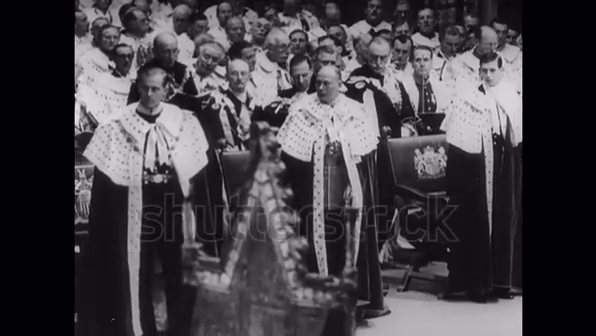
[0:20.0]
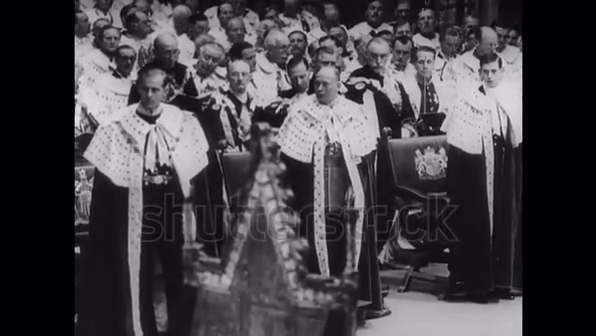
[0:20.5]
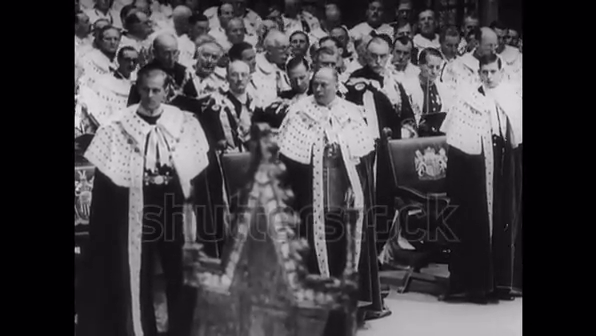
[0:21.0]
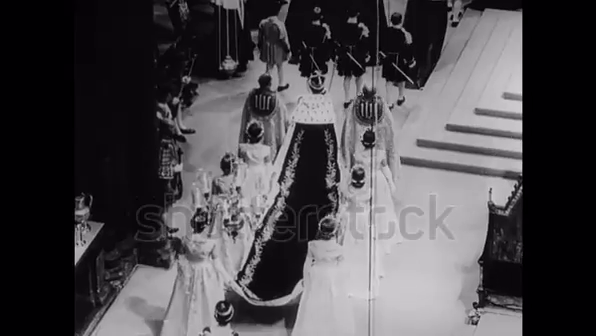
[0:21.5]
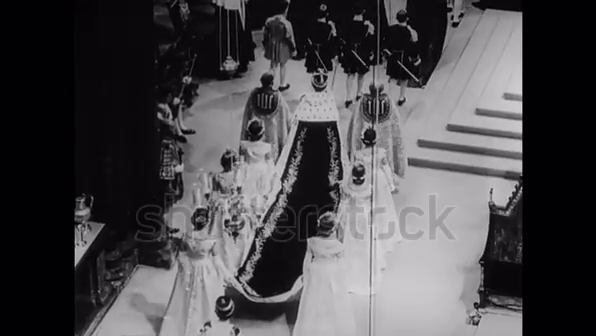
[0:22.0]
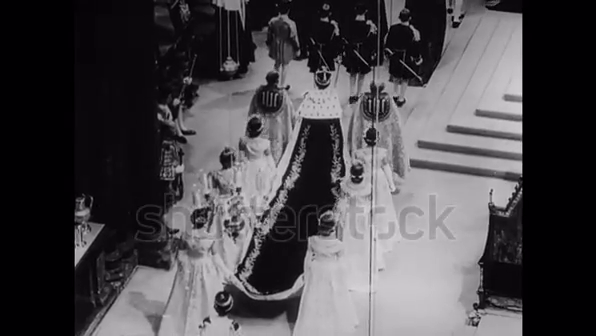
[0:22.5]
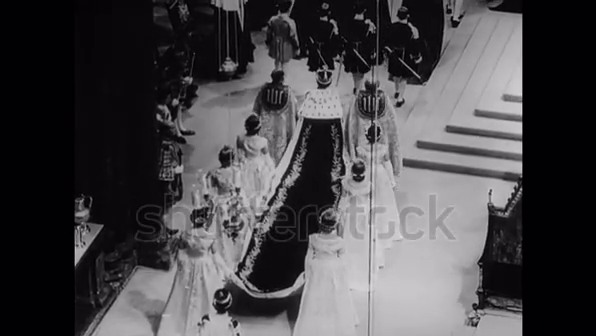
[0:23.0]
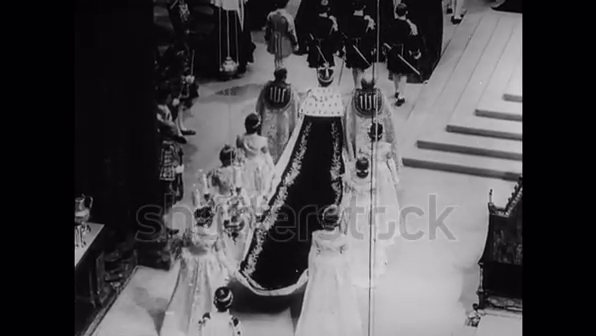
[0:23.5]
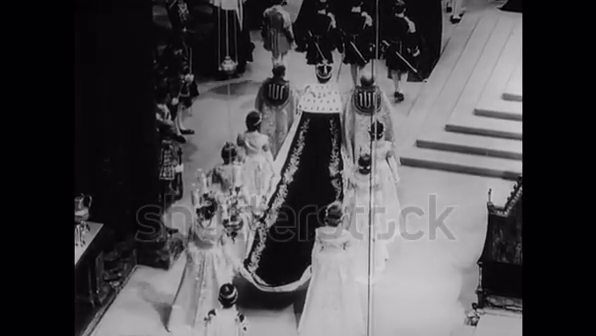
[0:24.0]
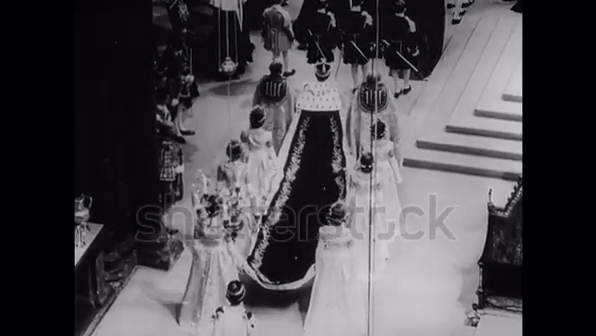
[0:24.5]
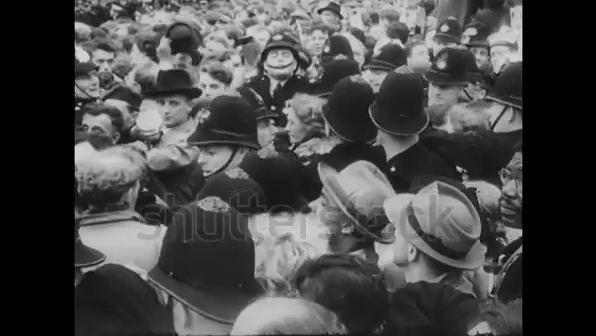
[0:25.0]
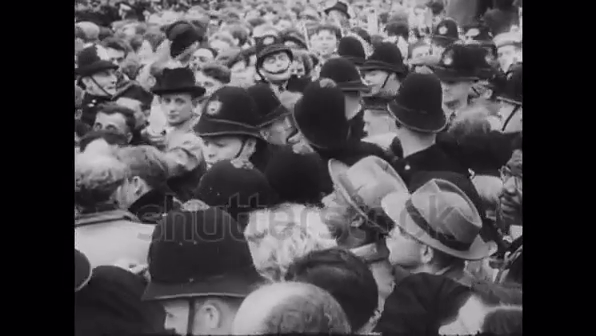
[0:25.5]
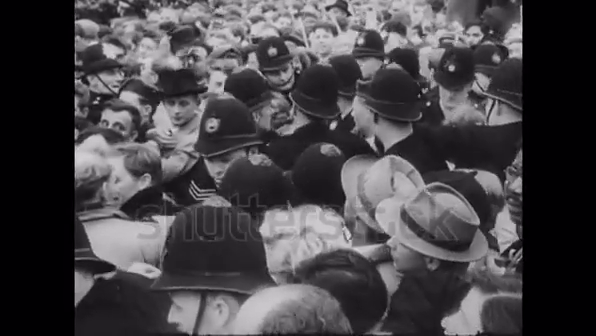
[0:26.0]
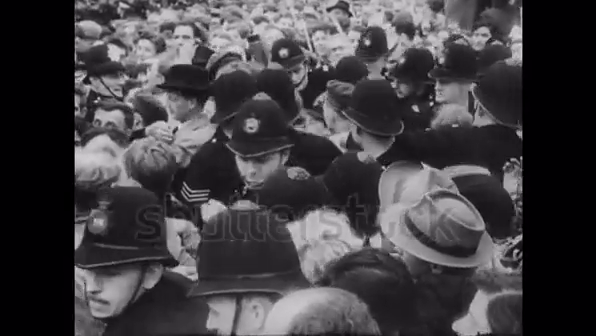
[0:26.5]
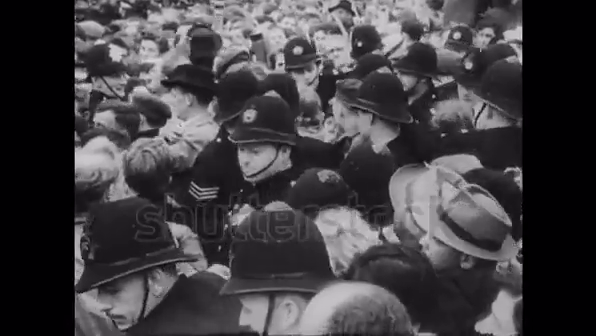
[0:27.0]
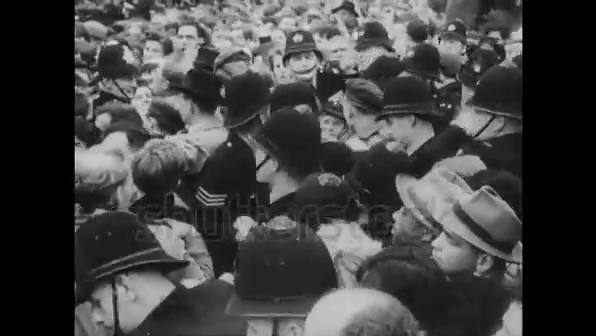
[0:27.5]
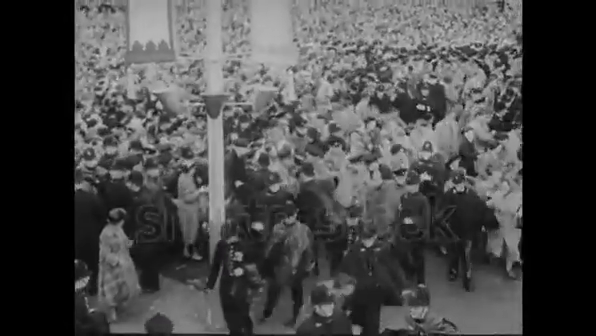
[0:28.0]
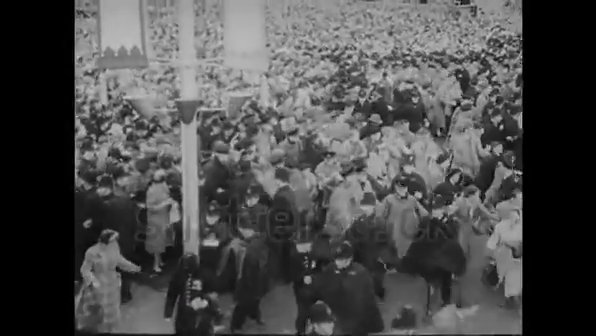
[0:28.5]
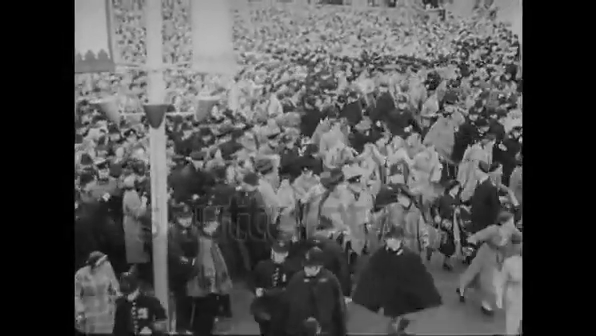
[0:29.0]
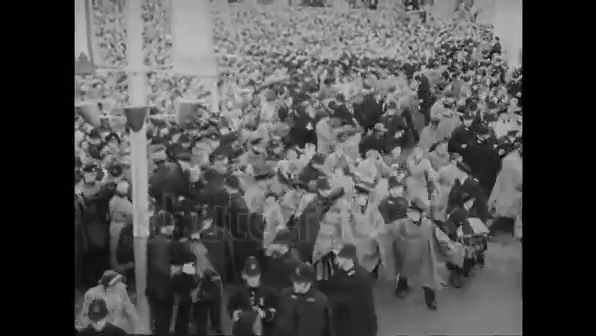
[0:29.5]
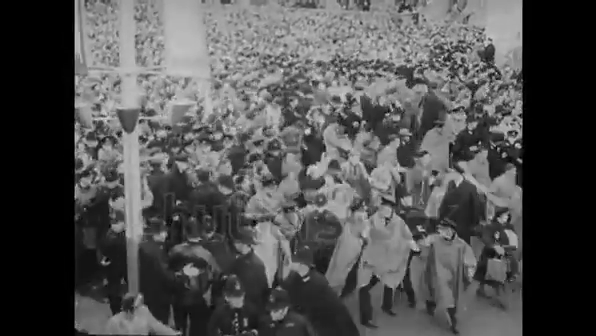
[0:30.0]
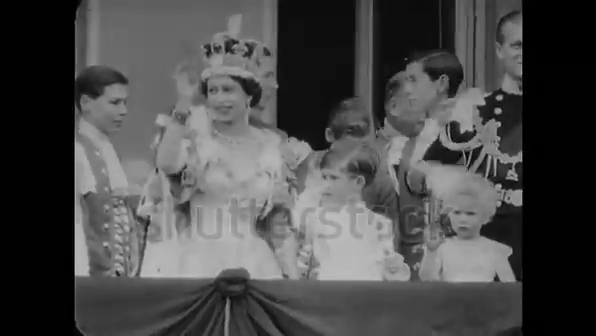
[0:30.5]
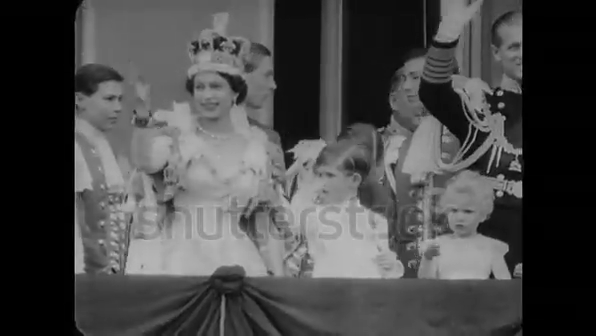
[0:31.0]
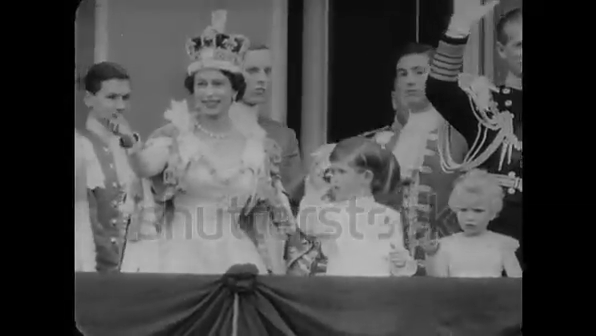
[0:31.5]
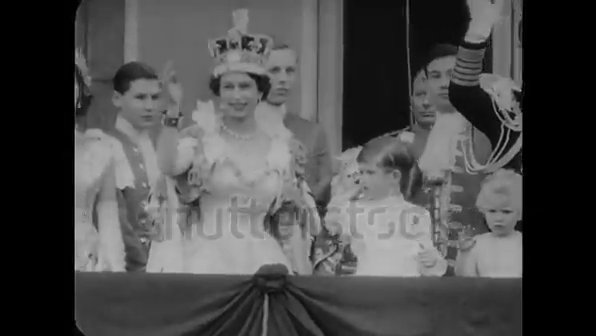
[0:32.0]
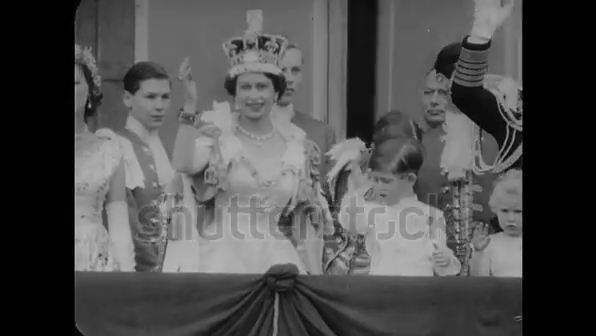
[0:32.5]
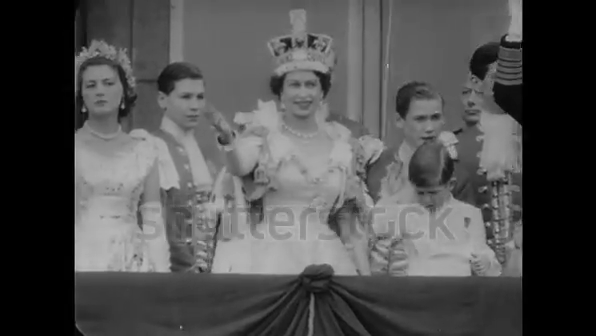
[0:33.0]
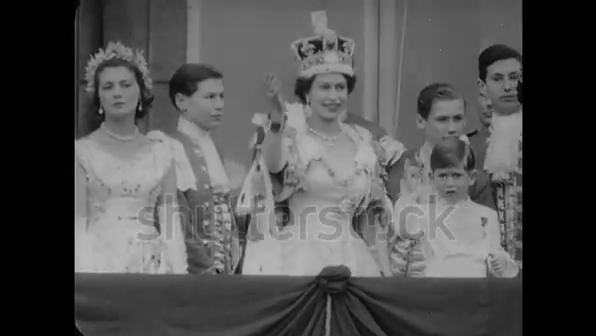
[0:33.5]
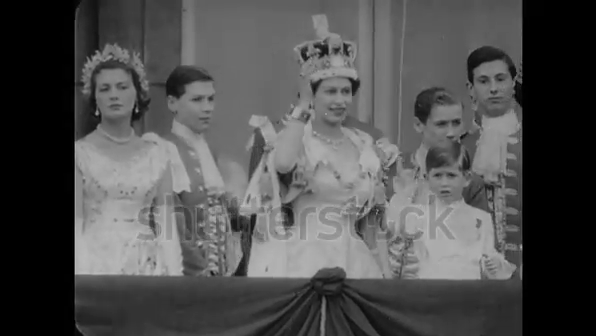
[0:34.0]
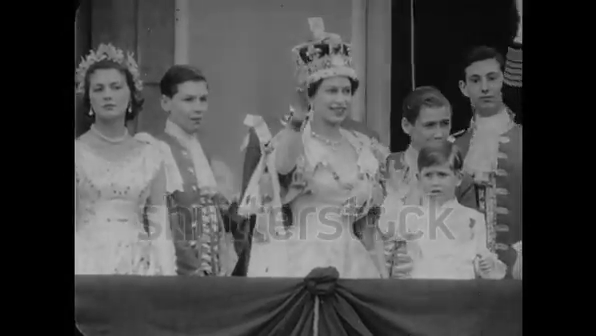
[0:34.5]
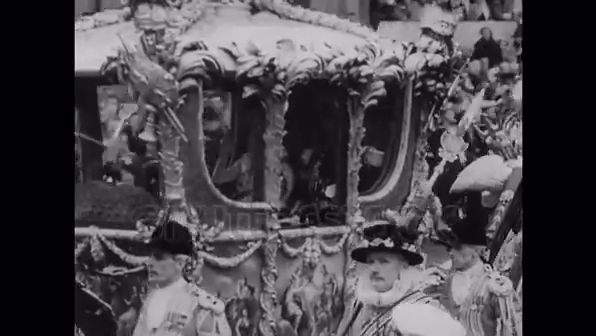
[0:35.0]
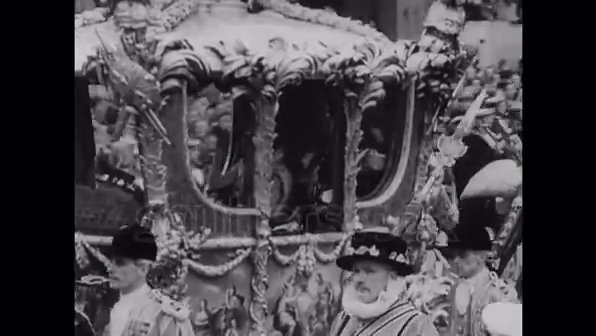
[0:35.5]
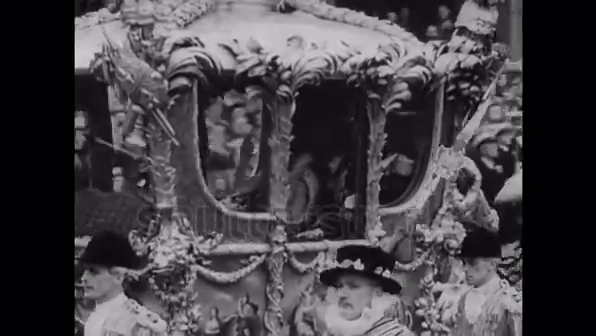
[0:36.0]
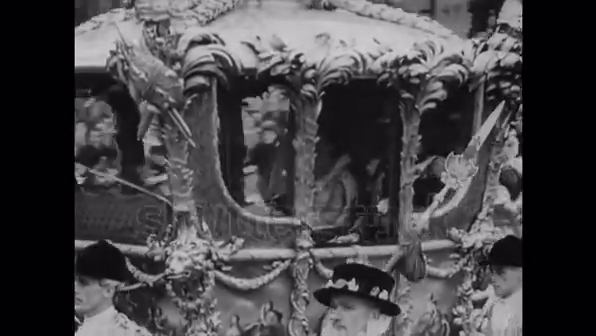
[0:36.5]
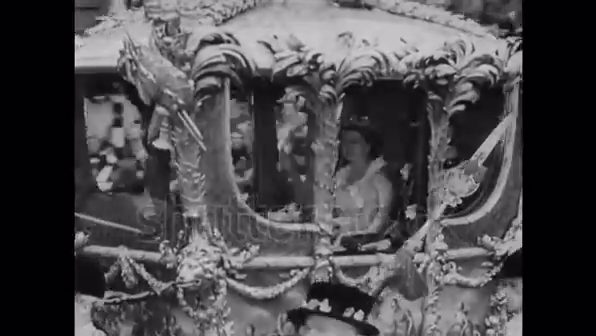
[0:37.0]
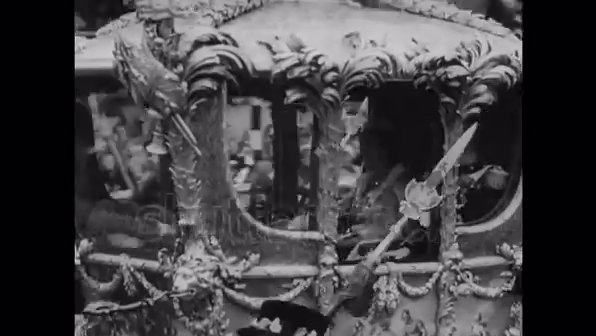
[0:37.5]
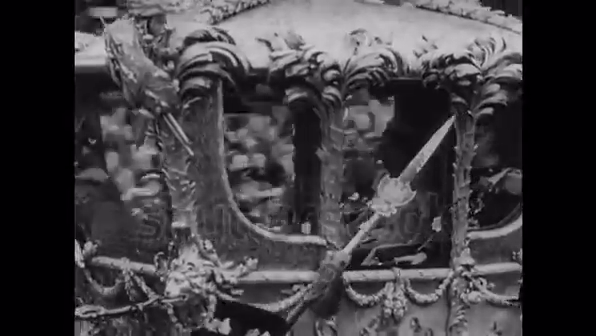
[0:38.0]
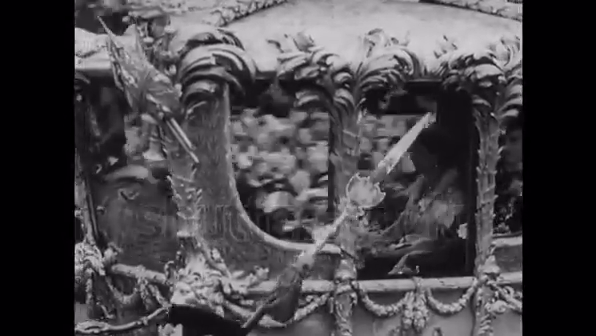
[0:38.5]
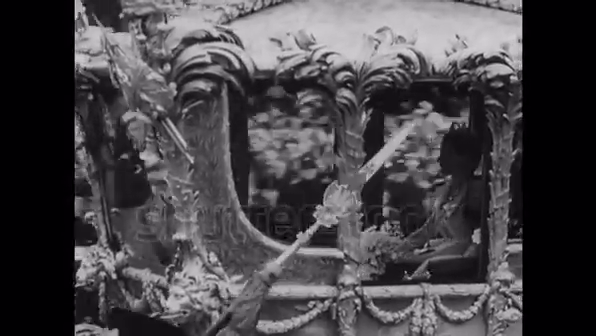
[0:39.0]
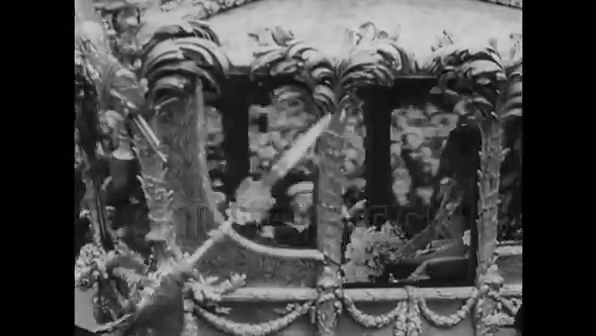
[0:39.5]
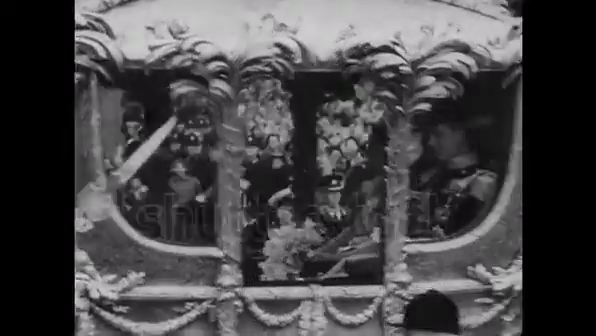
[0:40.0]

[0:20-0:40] The Queen walks, with a lot of people to the side; two people walk beside her at the same time. Behind her are women in white dresses on the left and right sides, and the Queen wears a very long cape. In front of her, what look like soldiers walk in her direction as well. A large group of people appears, with a lot of police officers controlling the crowd. The people in the crowds are going crazy, walking and running everywhere, excited about the event. The Queen waves to everyone, wearing her crown, with people around her, royalty members and family members. Then what looks like the Queen is transported in a royal carriage; she is inside the carriage with people, apparently with a man. Throughout the video, a watermark in the middle says "Shutterstock."